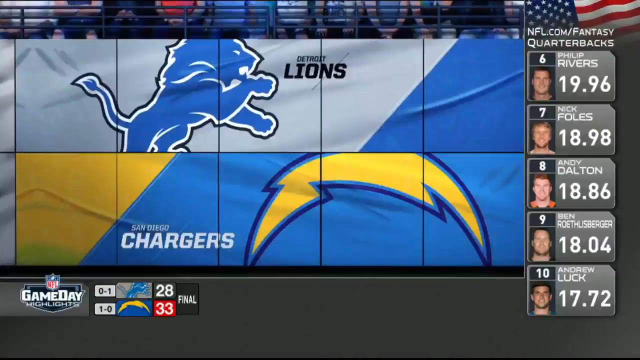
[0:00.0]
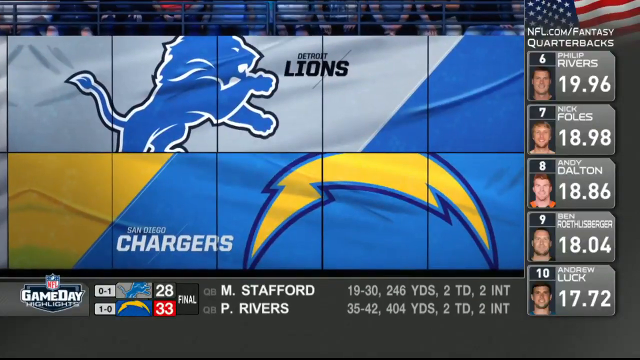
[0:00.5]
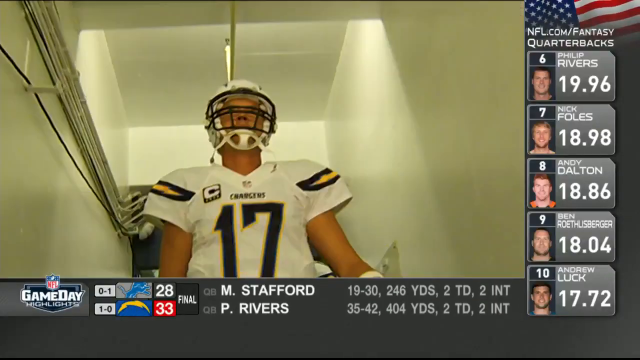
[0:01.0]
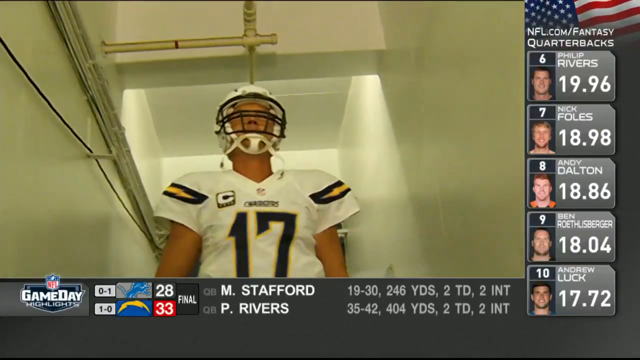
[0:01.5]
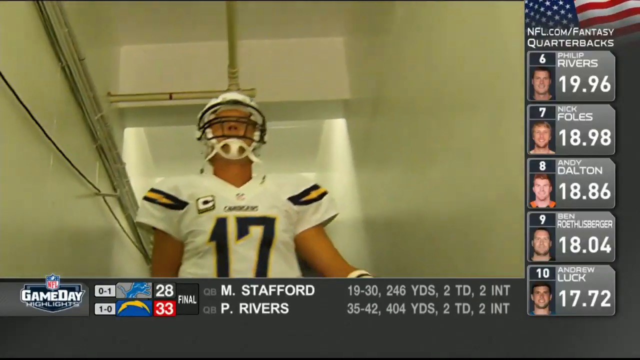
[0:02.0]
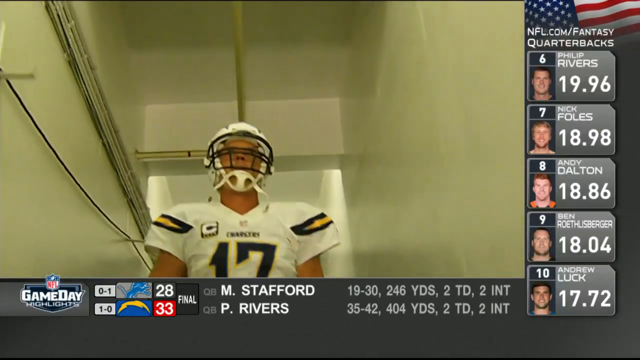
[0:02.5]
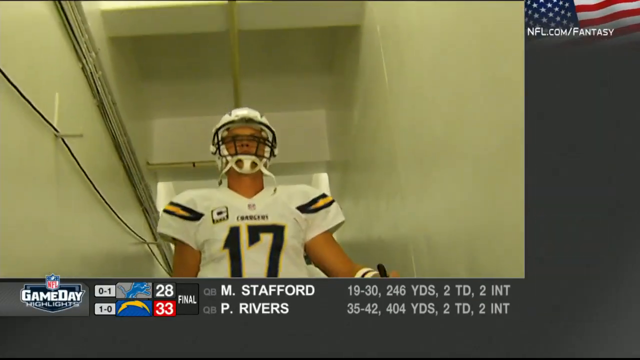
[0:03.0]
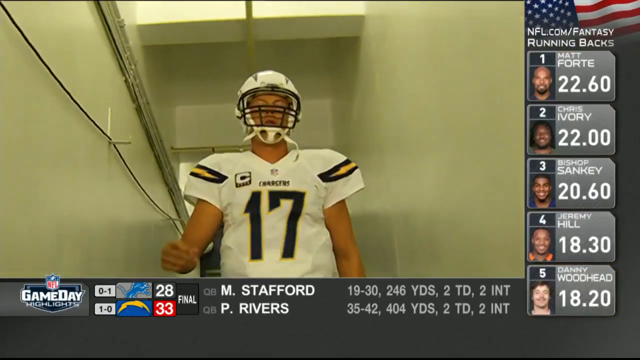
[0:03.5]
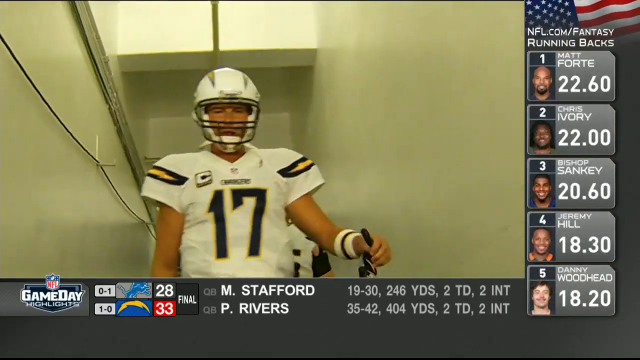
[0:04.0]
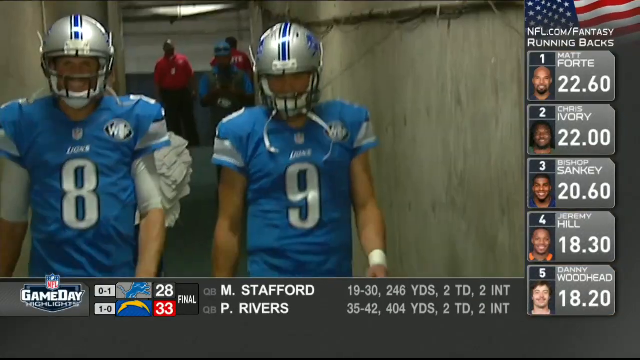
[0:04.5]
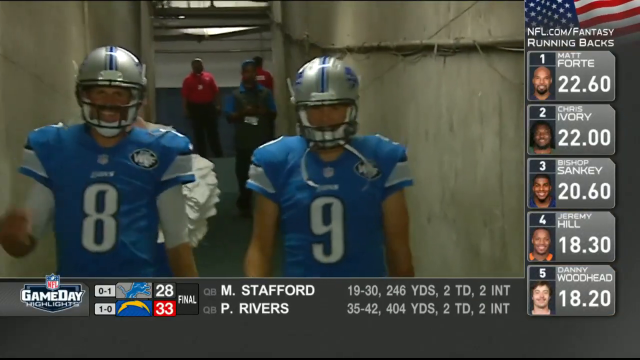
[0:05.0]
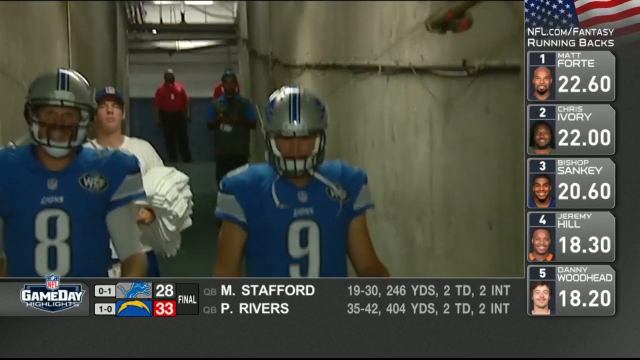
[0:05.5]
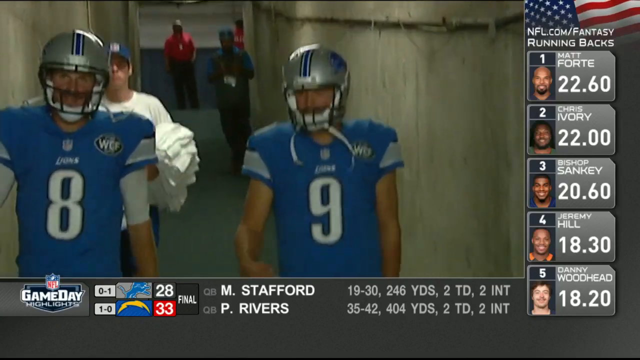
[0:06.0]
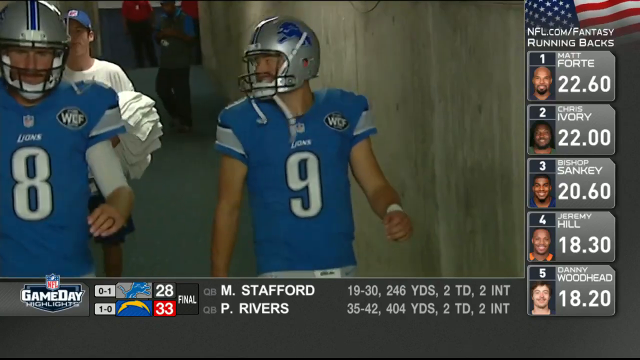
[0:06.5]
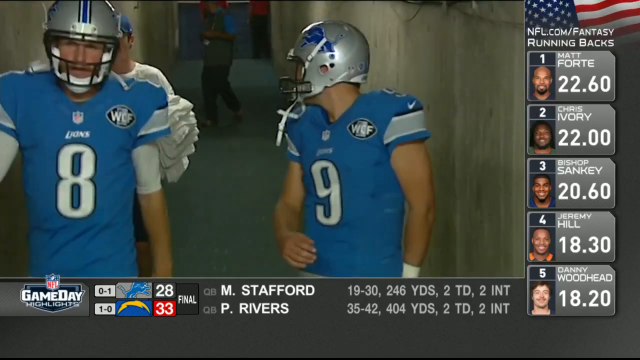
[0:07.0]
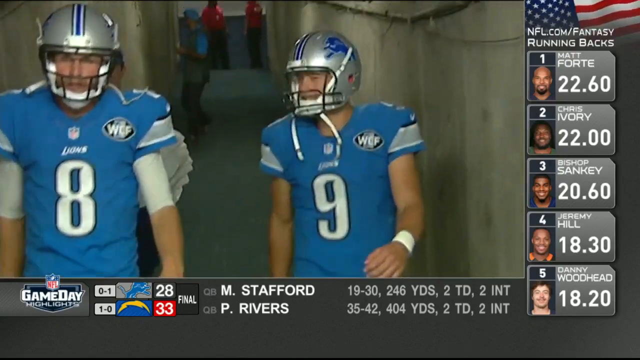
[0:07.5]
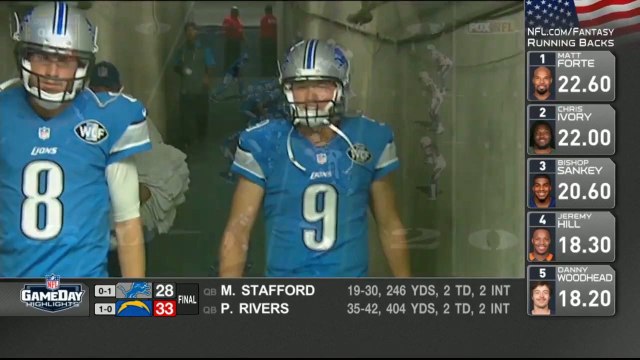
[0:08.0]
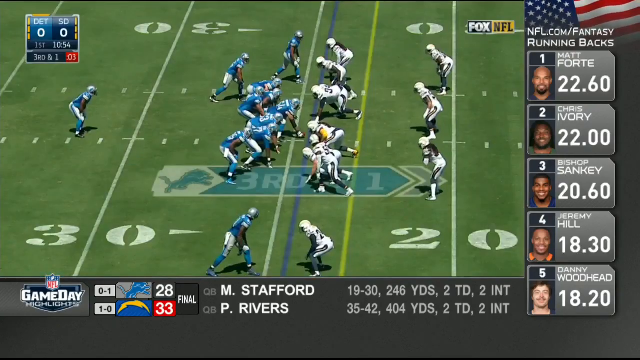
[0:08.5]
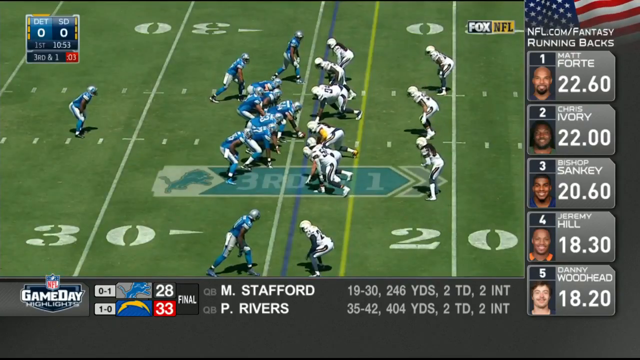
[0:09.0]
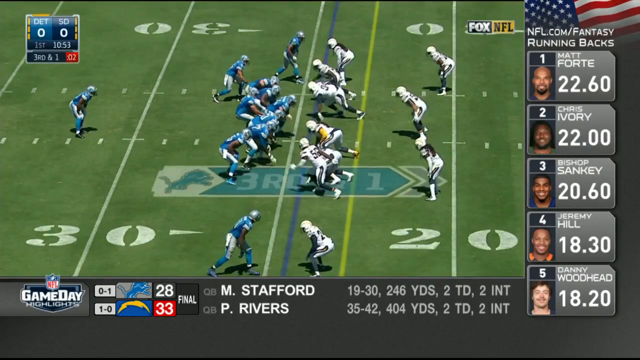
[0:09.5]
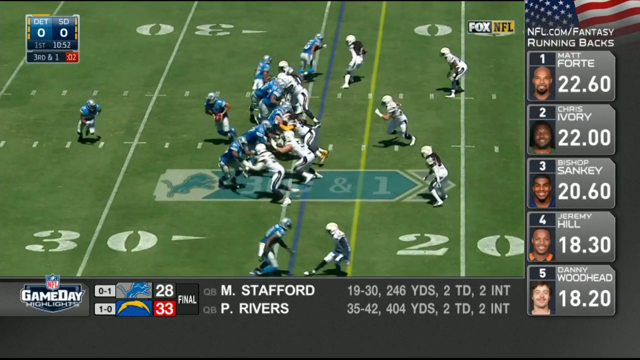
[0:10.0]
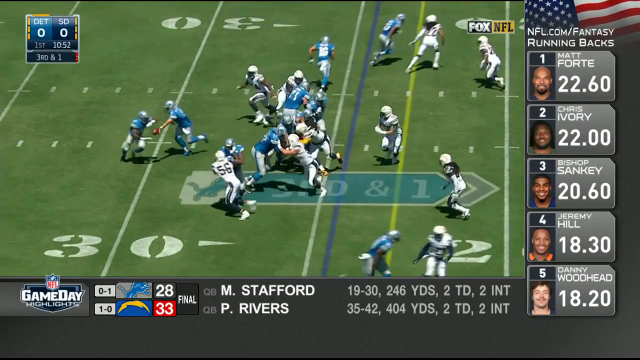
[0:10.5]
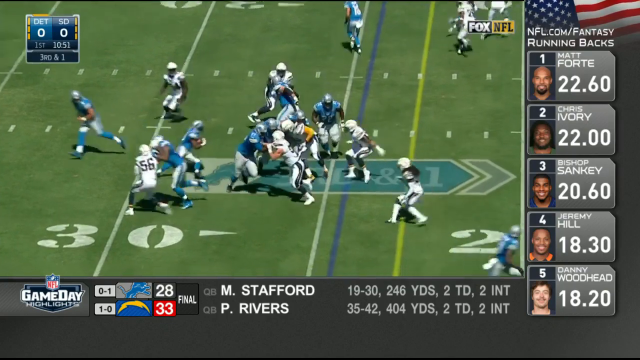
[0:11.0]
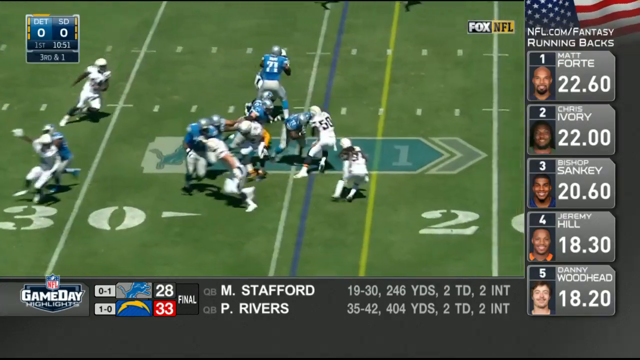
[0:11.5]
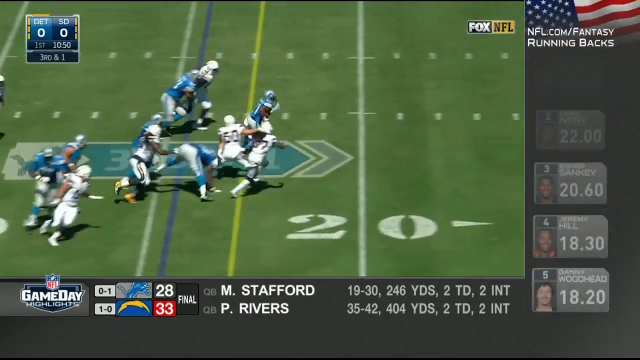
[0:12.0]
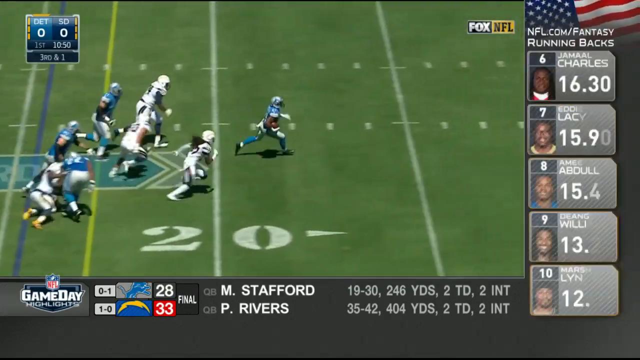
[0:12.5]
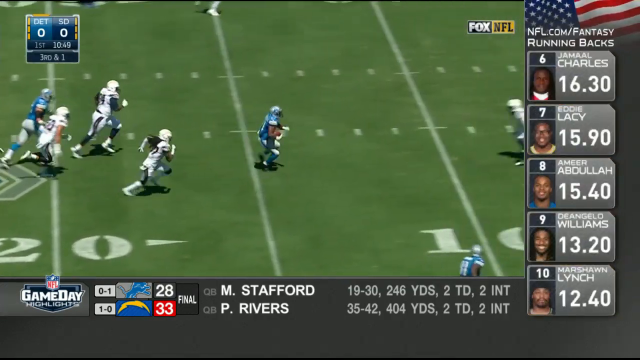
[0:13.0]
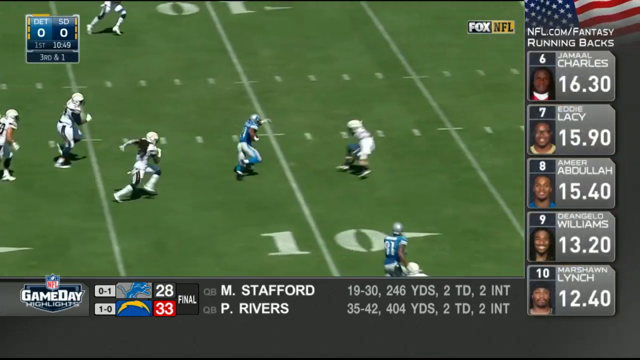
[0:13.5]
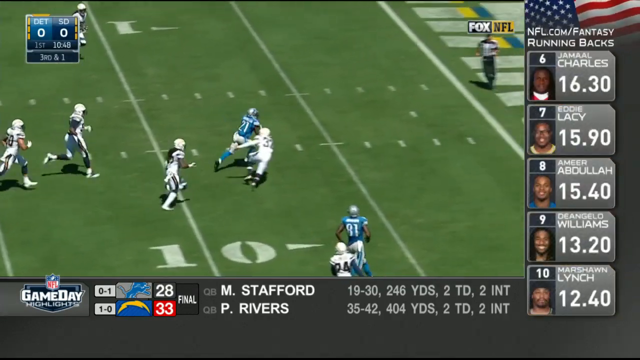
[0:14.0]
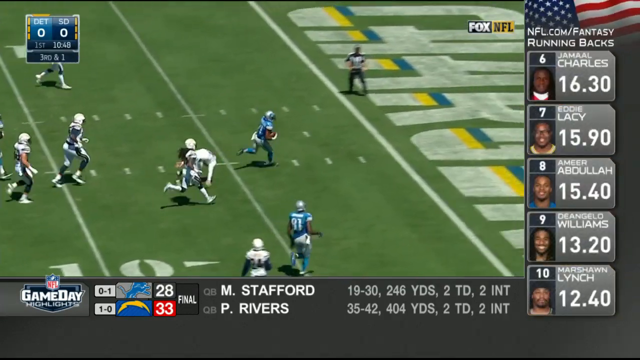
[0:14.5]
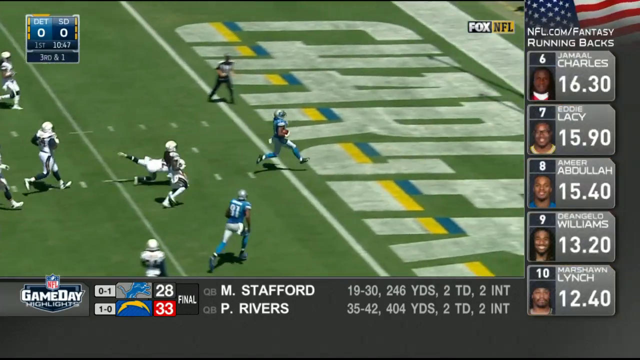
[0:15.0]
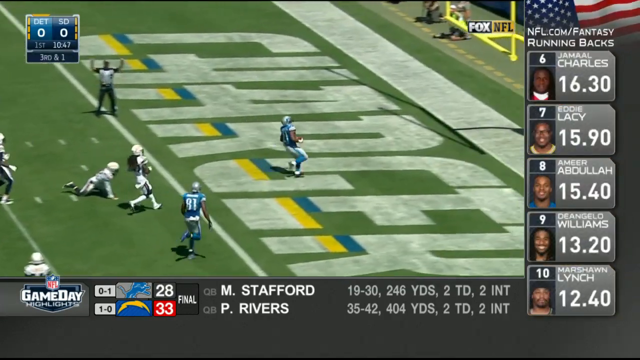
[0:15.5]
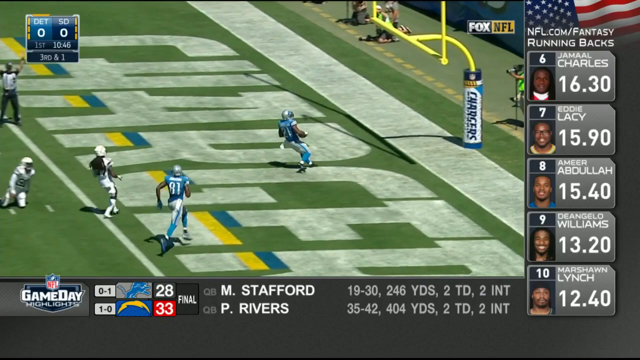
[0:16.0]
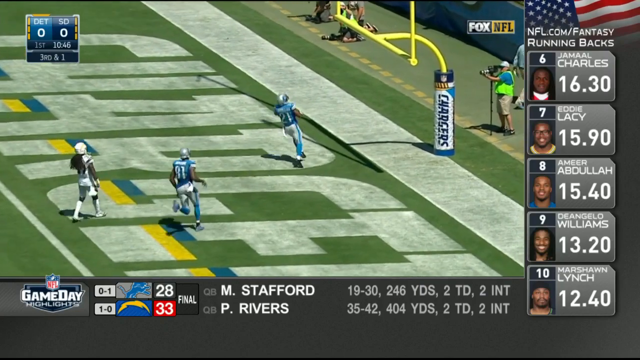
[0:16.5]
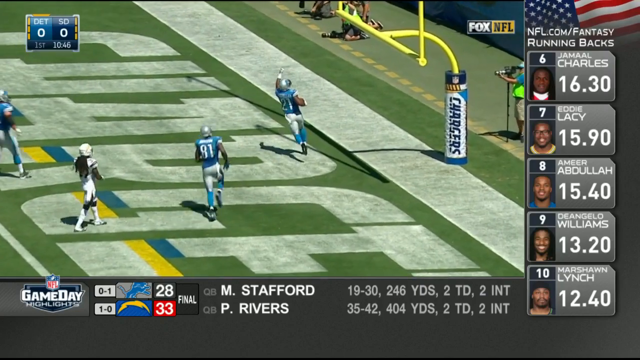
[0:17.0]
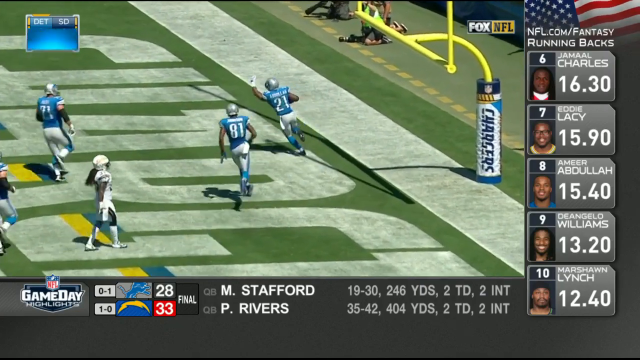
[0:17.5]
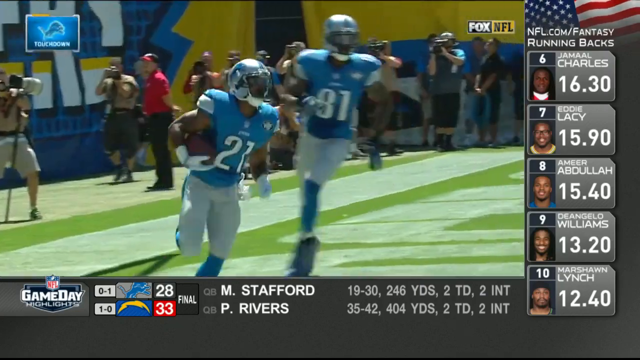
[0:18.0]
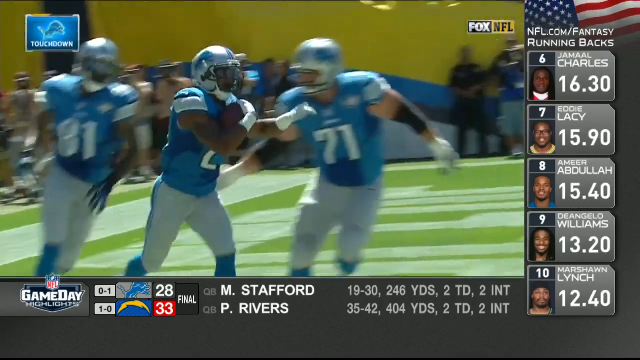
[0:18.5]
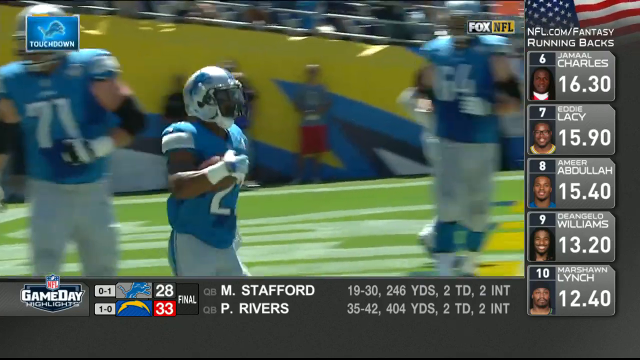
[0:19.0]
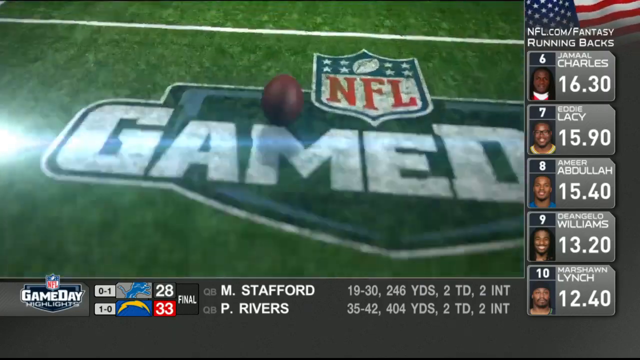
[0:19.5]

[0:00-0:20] The video appears to be from a sports news station of some kind. It opens with two team logos on rectangular graphics. On the top one, black text reads "Detroit Lions," with "Lions" larger and bold, and the blue lion logo is to the left of it. Right underneath is a graphic of similar size reading "San Diego Chargers" in white text, positioned a little more to the left, with "Chargers" larger, and a yellow, somewhat curved lightning bolt to the right of it. Each graphic is two colors: the Lions graphic is gray on the left with an angled line up to the right and then blue to the end of the rectangle, while the Chargers graphic is yellow on the left, then an angled line up to the right, then a blue background behind the text and logo. To the right, white text reads "NFL com \ fantasy quarterbacks," listing five quarterbacks with their pictures on the left and numbers to the right. Stats and scores run along the bottom. Next, football players walk through a tunnel. A player in a white uniform with a black number 17 on his chest, a white helmet with a black face mask, and a little yellow and black striping on his shoulders walks down a white tunnel, apparently heading out onto the field; small letters above his number indicate he plays for the Chargers. The view switches to a cement hallway where two players in blue, wearing white numbers 8 and 9 on their chests and silver helmets with a blue stripe down the middle, apparently Lions players, walk; a man holding white towels is behind them. The teams then line up at the line of scrimmage on the 25-yard line, the blue team on the left and the white team on the right. The quarterback gets the ball and hands it off to another player, who runs past the line of scrimmage and keeps running while people follow him trying to tackle him. He reaches the end zone, which reads "Chargers" in very large white letters, and holds up his arm somewhat in victory. A close-up follows of him in the end zone, jogging with the ball in his hand.